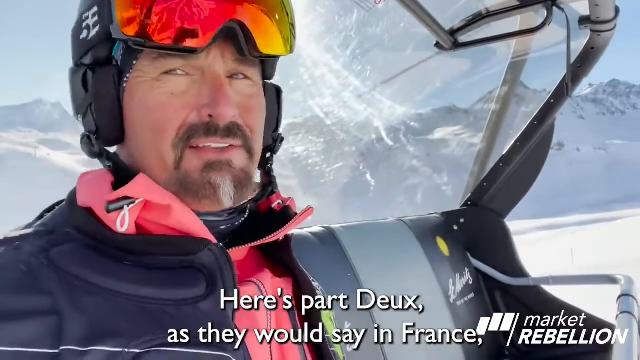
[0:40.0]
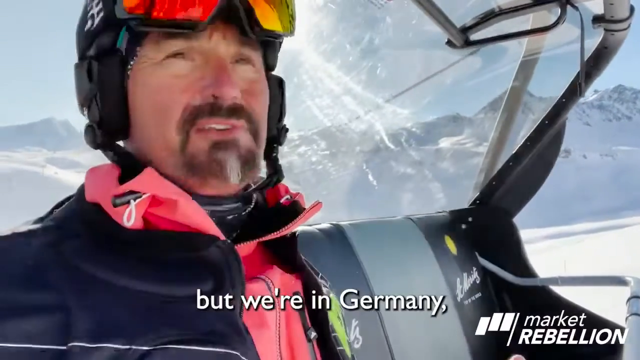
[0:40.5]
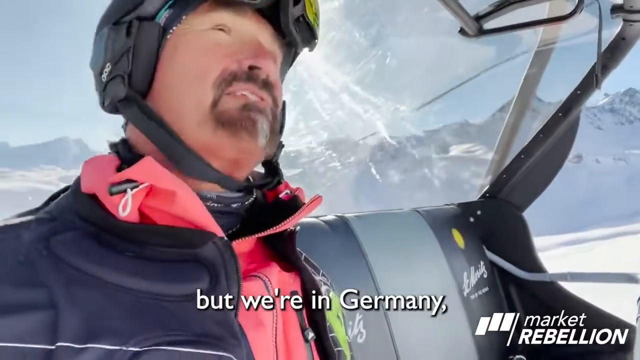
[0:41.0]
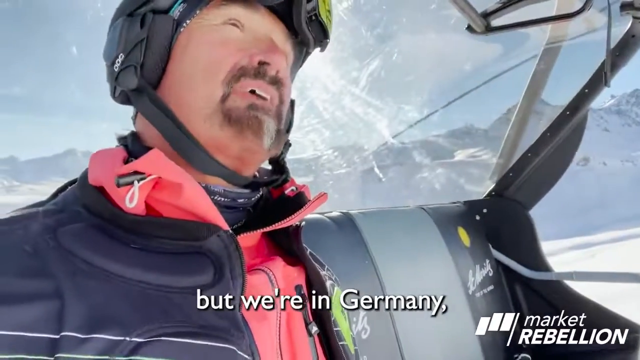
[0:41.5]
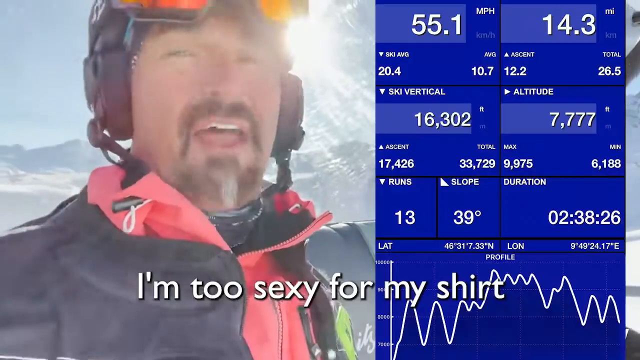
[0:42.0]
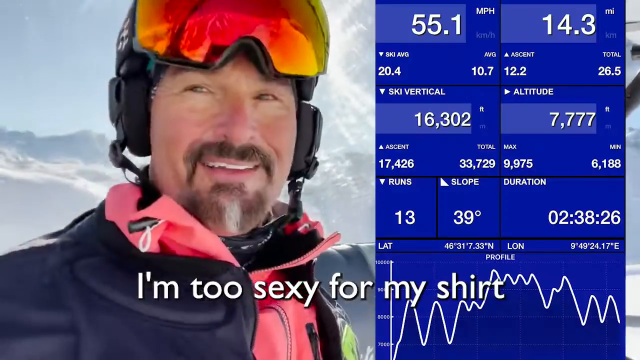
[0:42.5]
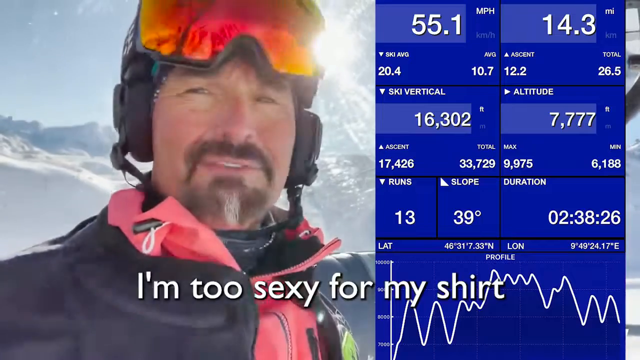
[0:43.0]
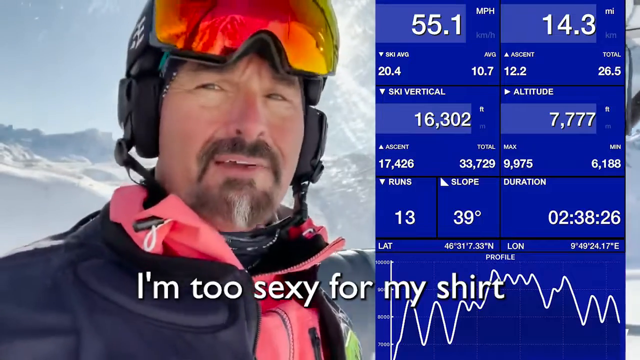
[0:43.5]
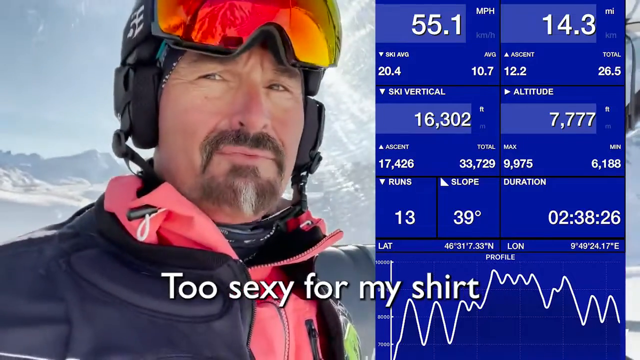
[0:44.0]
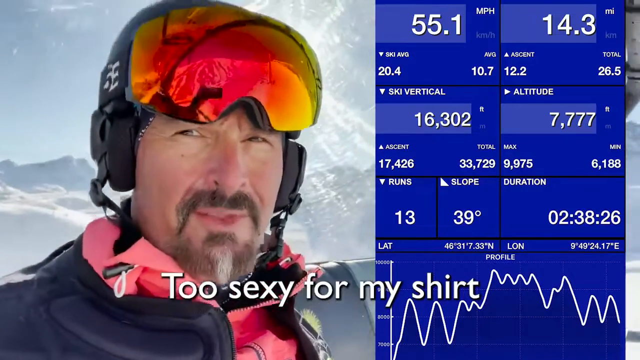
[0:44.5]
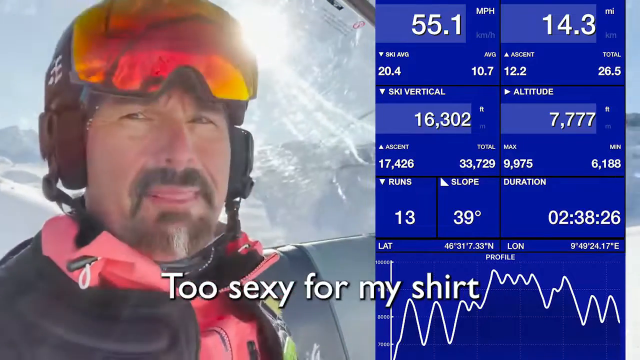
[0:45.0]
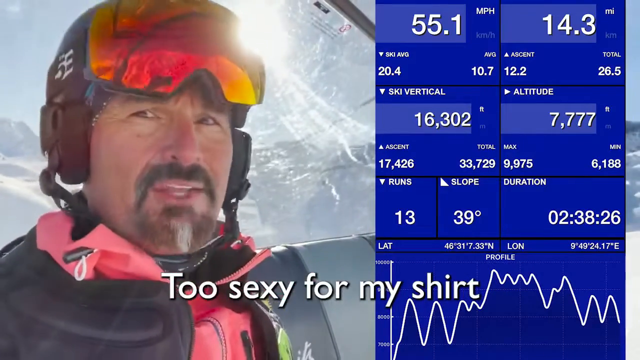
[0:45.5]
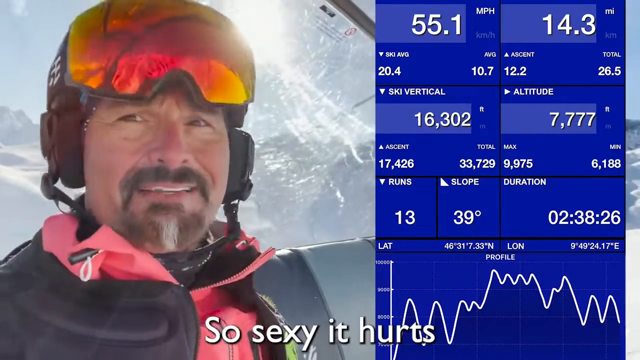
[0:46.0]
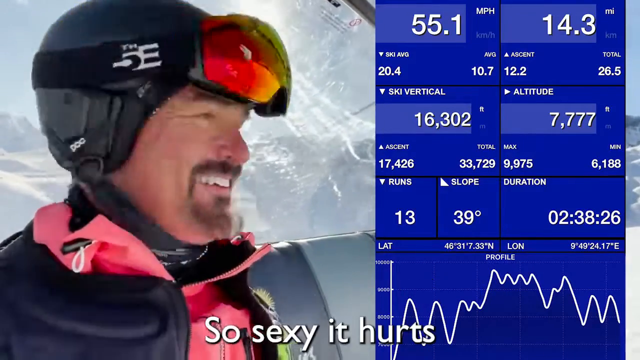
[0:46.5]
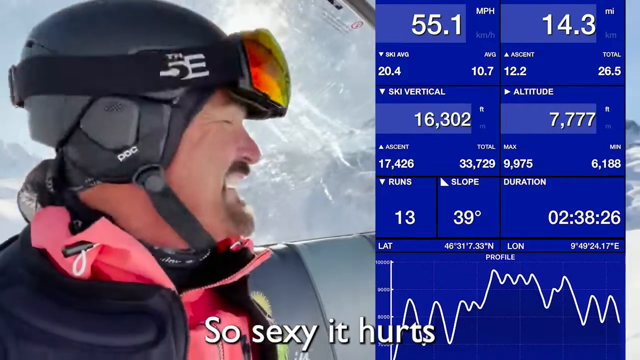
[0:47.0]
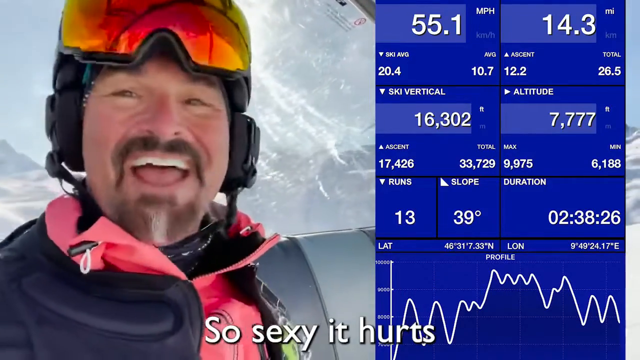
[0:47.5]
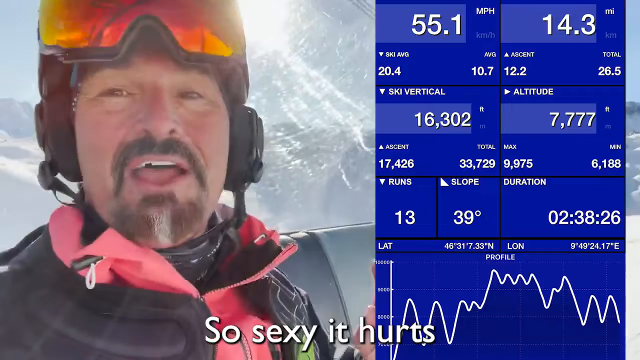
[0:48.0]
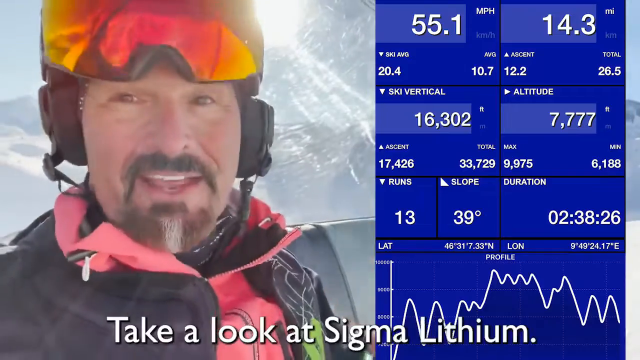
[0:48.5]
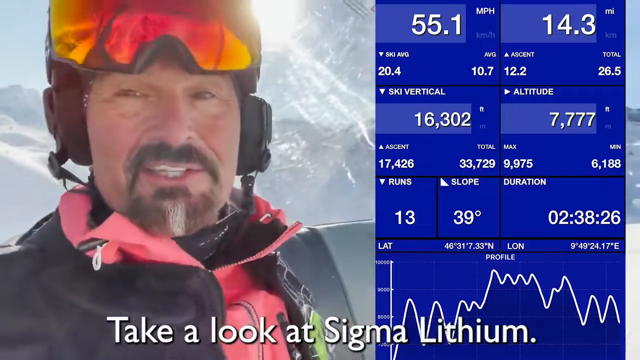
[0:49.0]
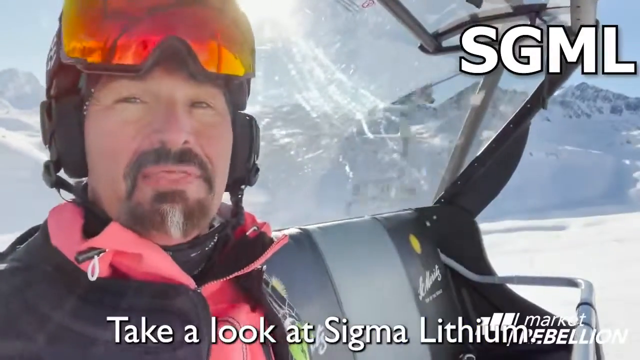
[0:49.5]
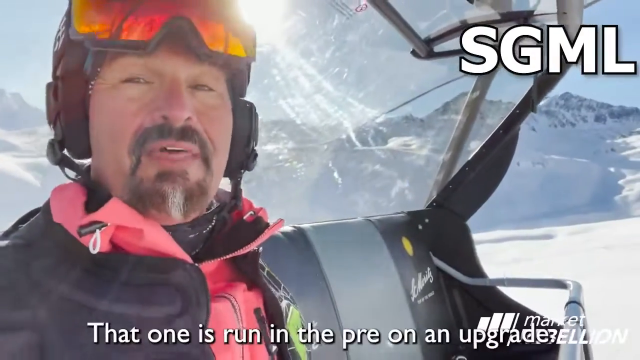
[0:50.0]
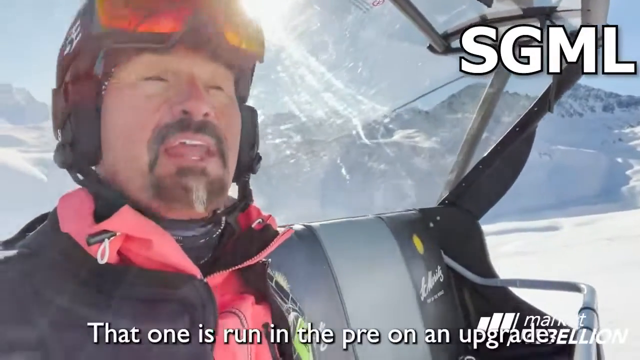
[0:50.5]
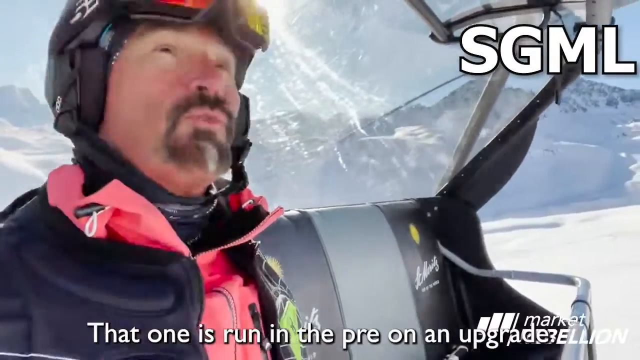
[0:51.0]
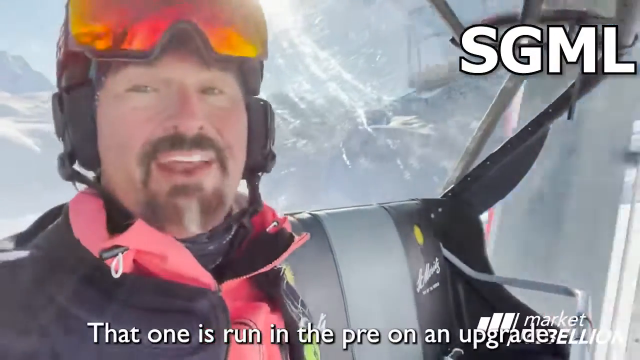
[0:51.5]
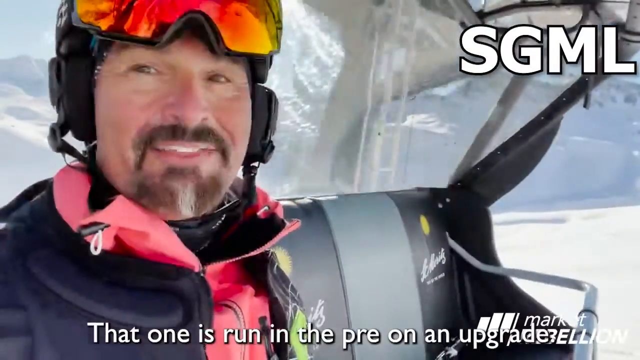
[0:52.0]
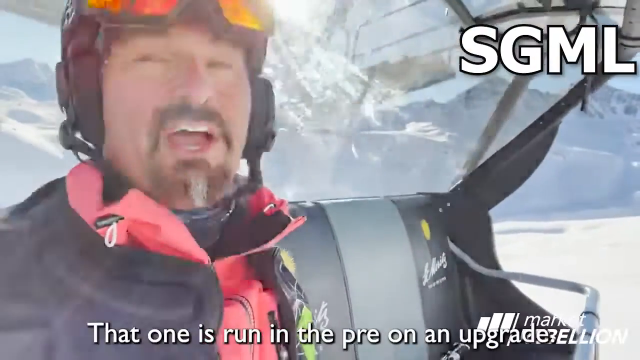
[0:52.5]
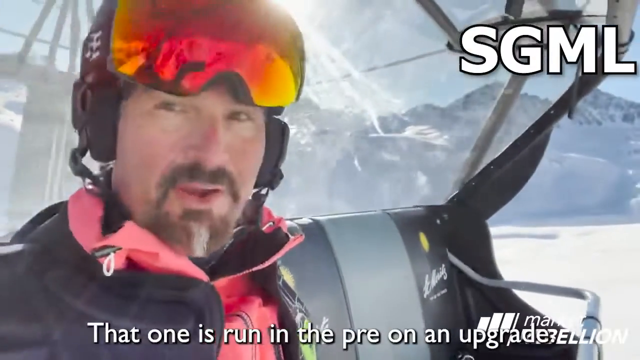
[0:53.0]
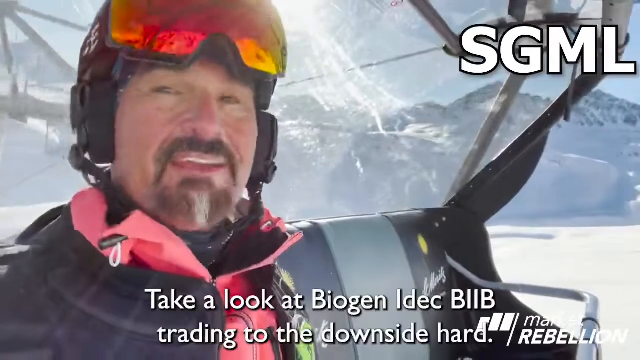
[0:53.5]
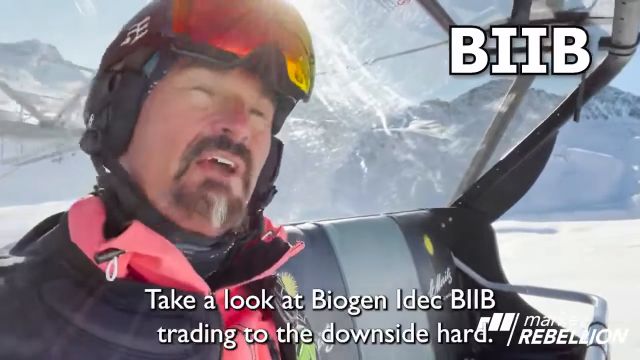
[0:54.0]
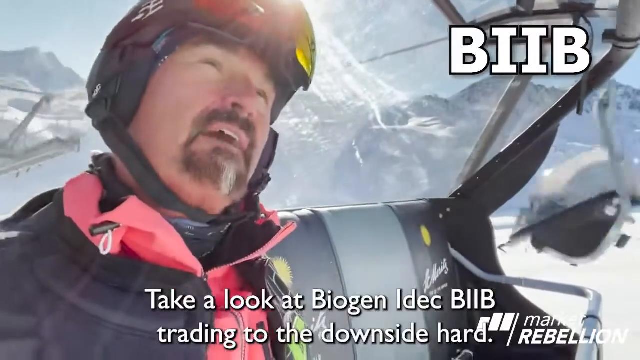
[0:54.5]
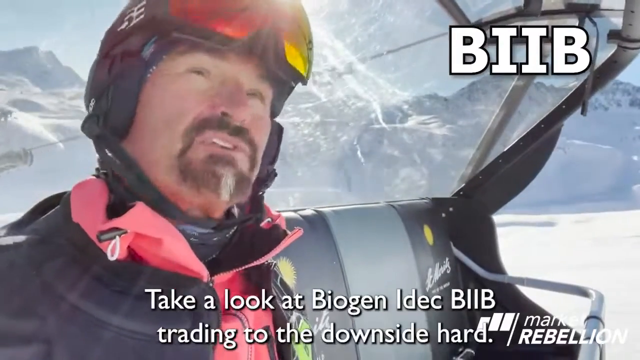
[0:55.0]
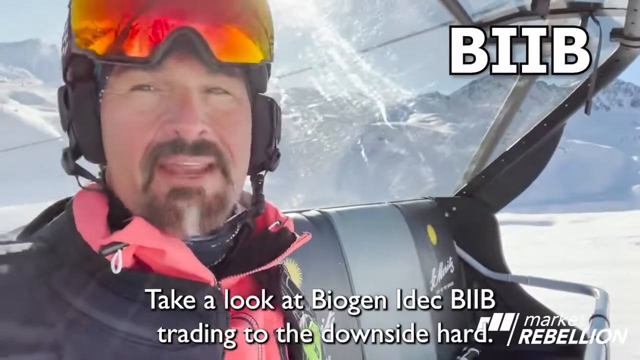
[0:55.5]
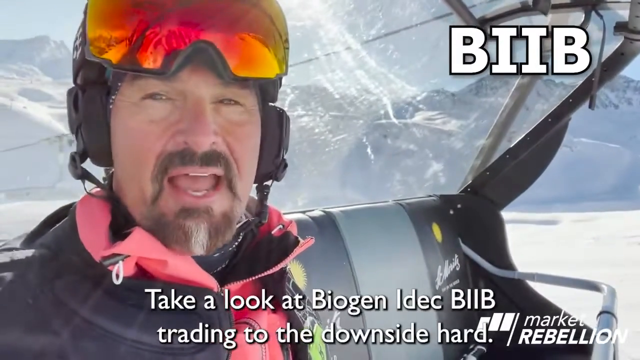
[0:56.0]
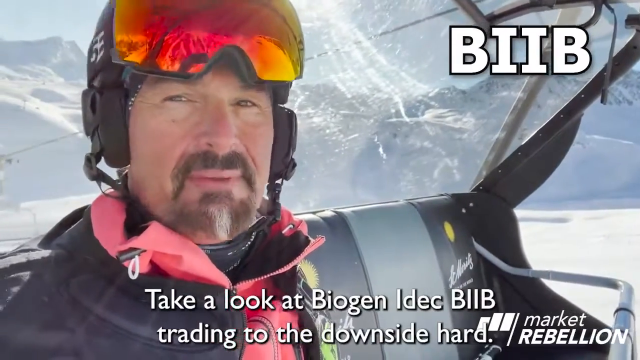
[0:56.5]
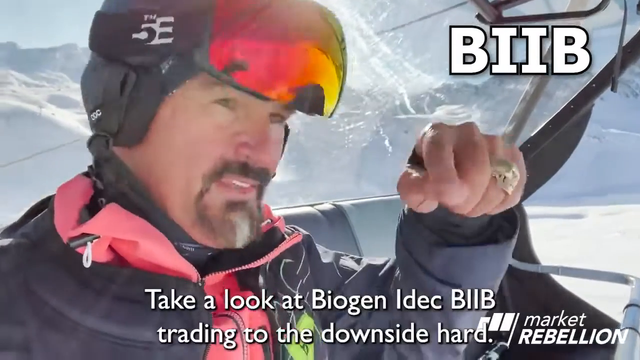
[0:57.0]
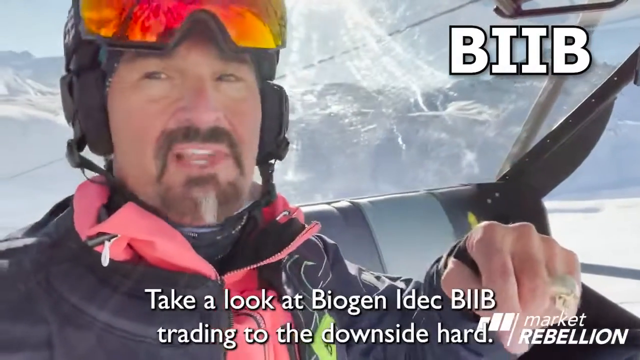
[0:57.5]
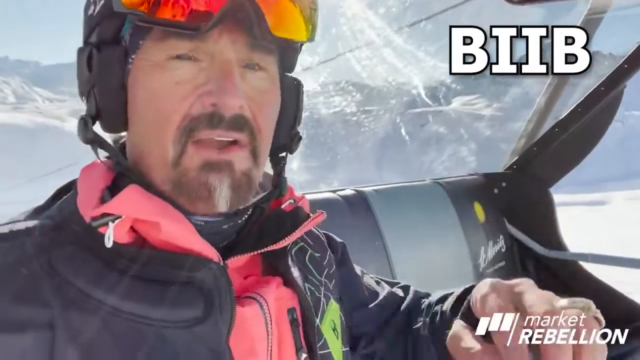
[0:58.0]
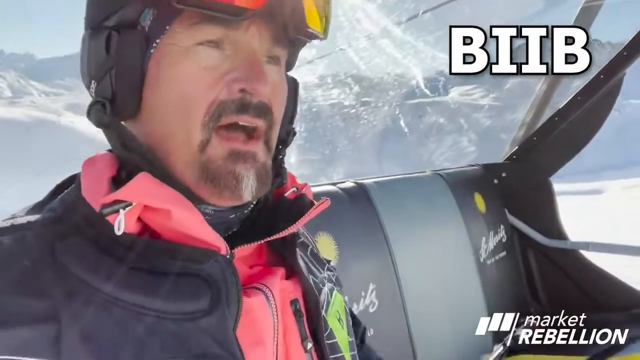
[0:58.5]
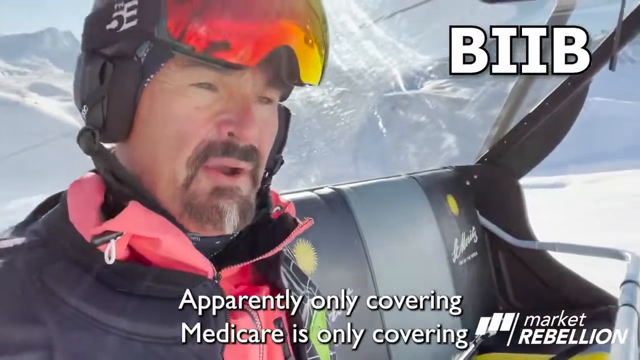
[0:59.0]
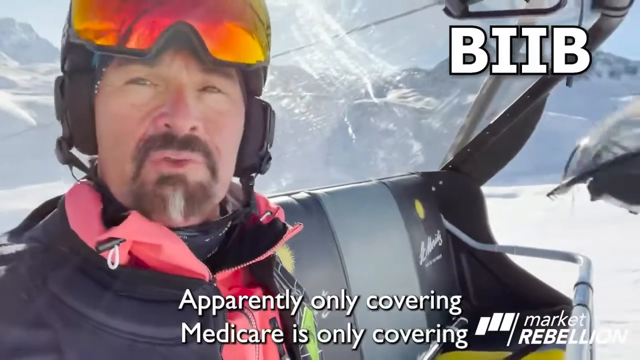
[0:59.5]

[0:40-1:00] The man appears to be skiing, apparently in Germany. A caption reads "I'm too sexy for my shirt", and a screenshot of his ski stats appears, showing slope degrees, run numbers, latitude, ski vertical, altitude and miles per hour. Further captions read "so sexy it hurts", "take a look at Sigma lithium", "take a look at Biogen IDEC BIIB trading to the downside hard" and "apparently only covering Medicare".